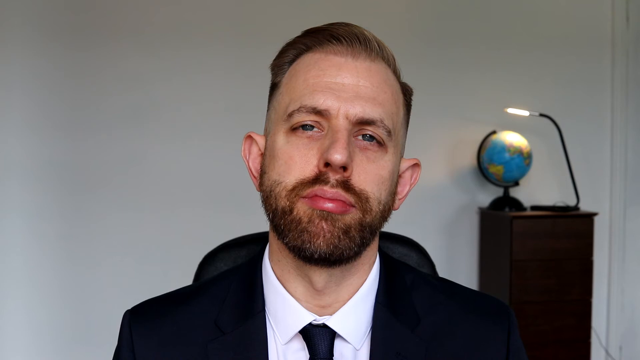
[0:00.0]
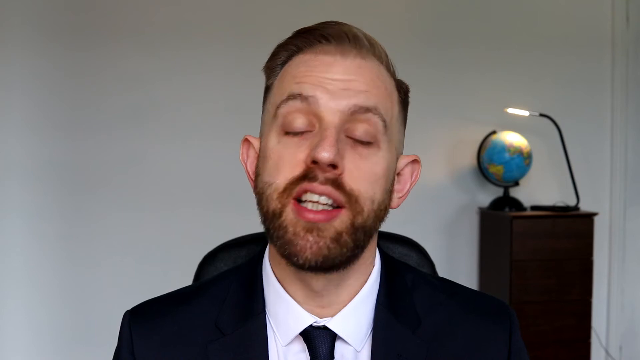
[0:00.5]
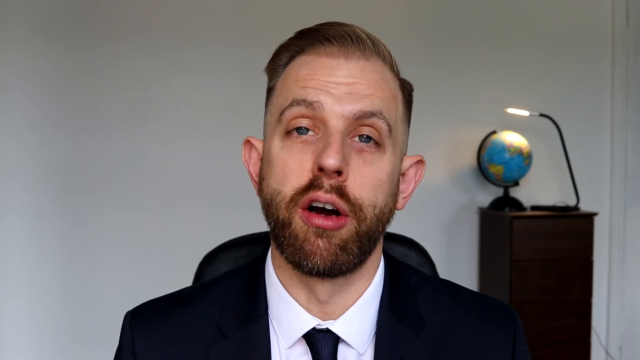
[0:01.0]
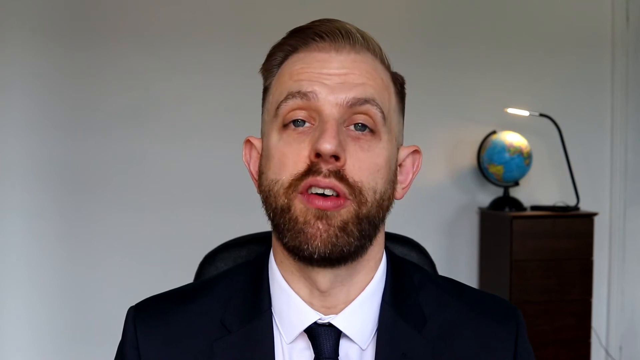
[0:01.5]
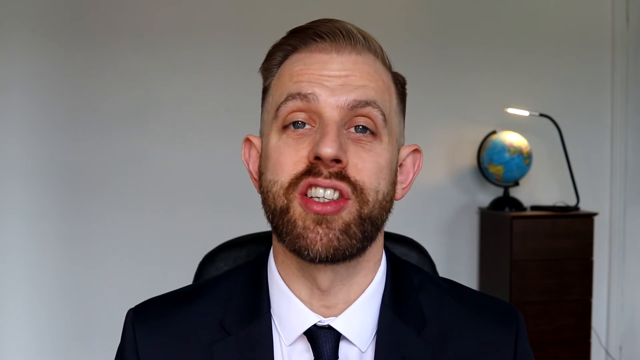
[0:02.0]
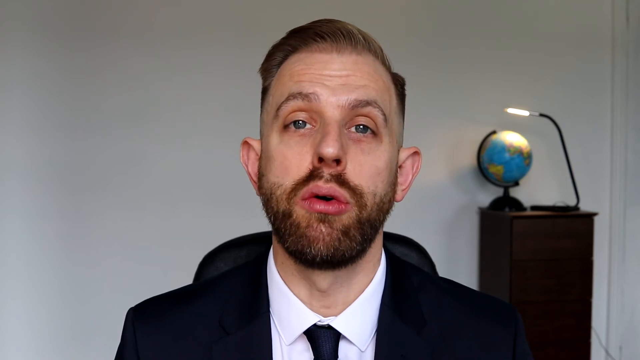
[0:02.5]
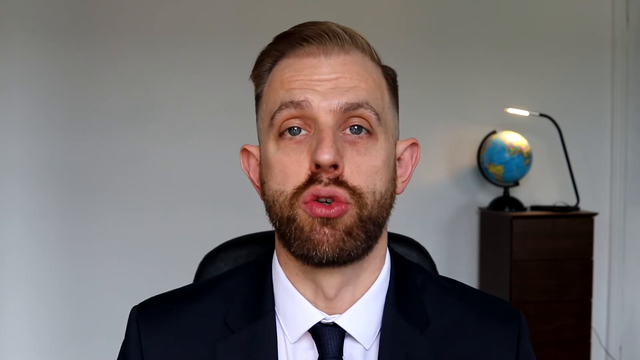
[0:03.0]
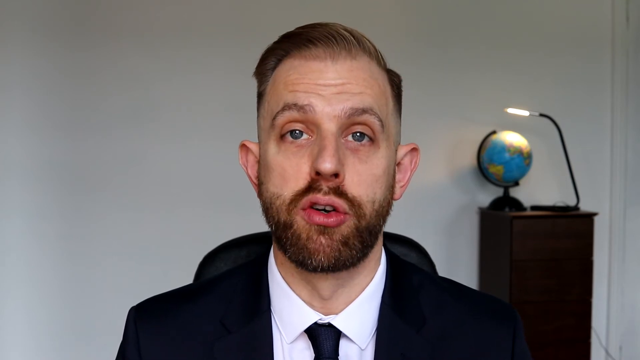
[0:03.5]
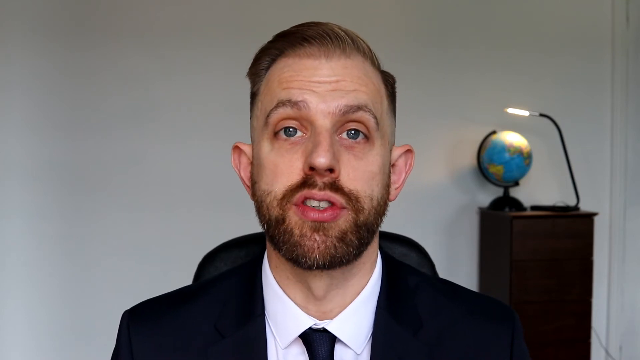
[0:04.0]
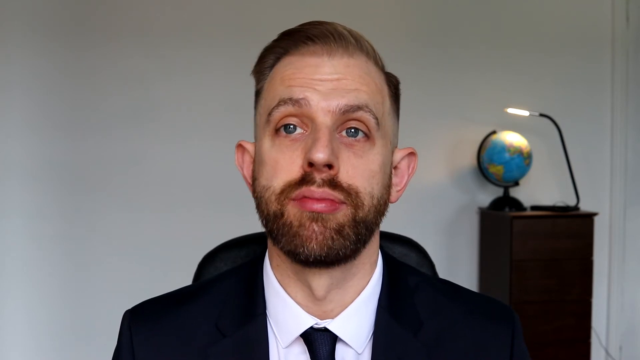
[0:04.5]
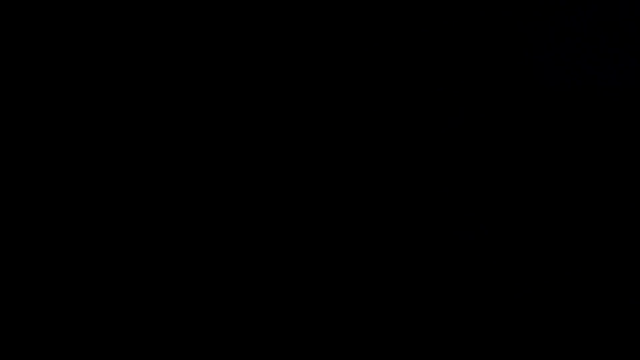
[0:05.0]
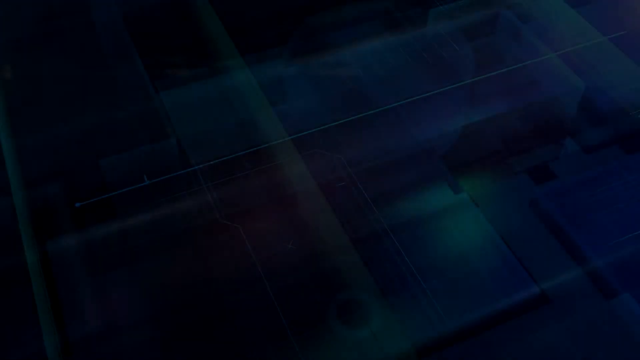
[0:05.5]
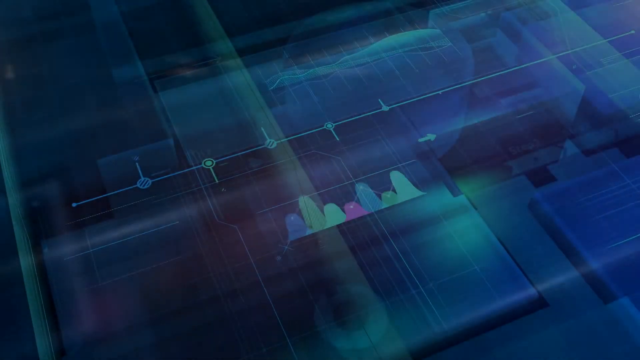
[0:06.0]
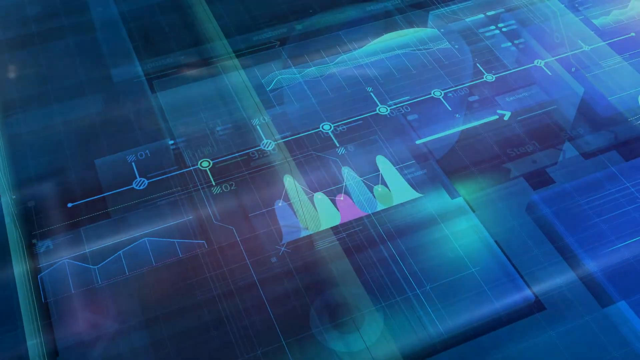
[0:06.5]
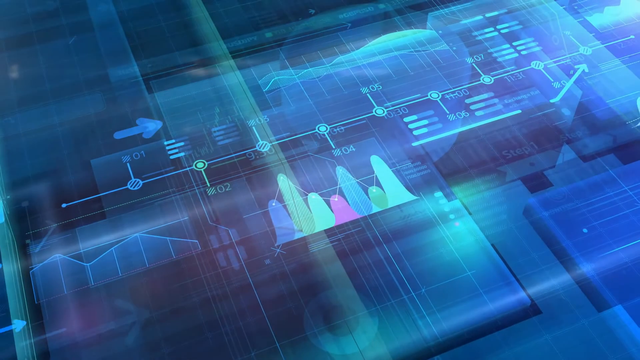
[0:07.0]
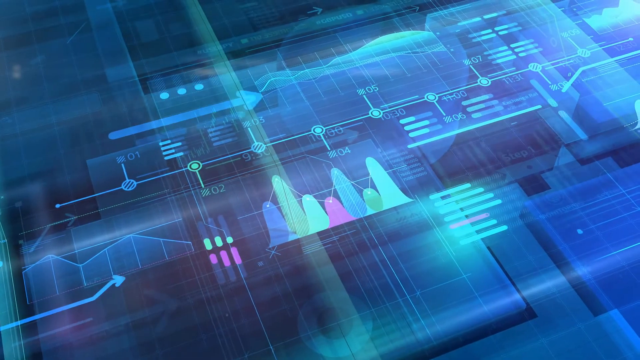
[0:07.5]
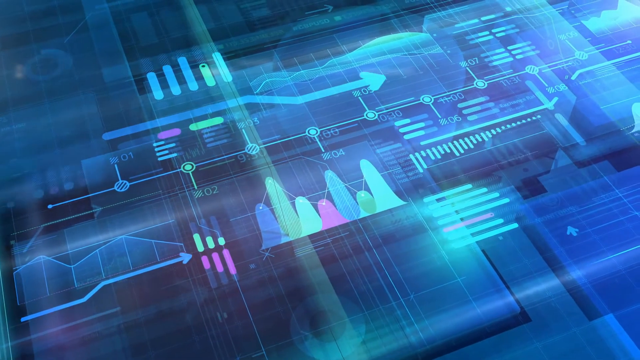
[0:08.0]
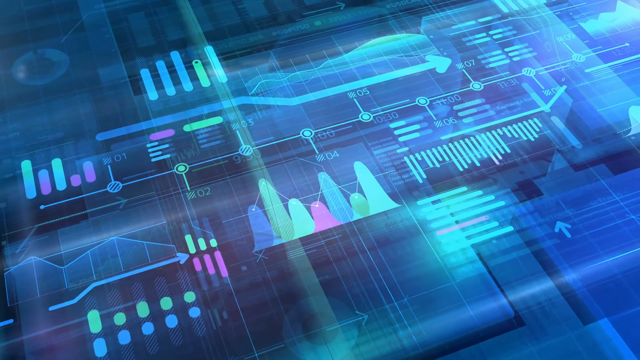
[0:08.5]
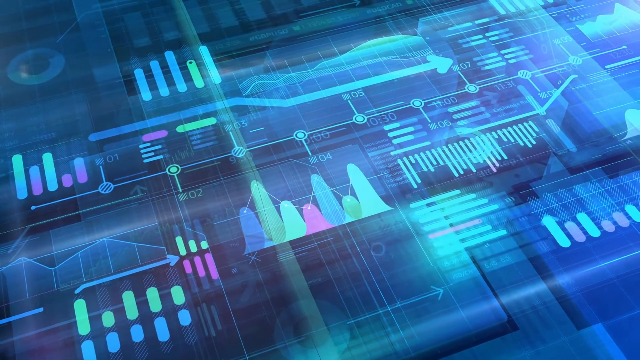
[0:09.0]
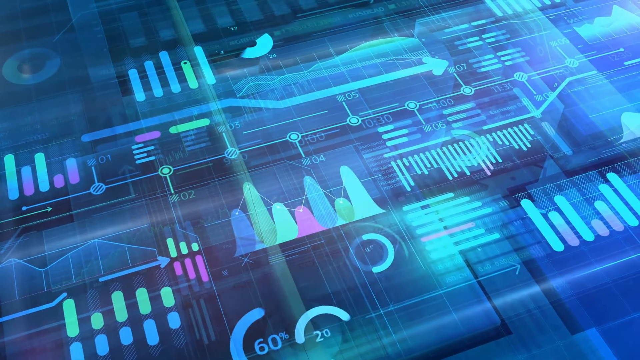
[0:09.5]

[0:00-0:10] A white man with a mustache, a beard and what may be reddish hair talks briefly. He wears what looks like a black coat and has a smug look on his face. The room has a white background, and in the back there is a globe on a stand, possibly a dresser, with a light above it shining down on top of the globe. The video then cuts to a graphic of charts and graphs going up, apparently the intro graphic.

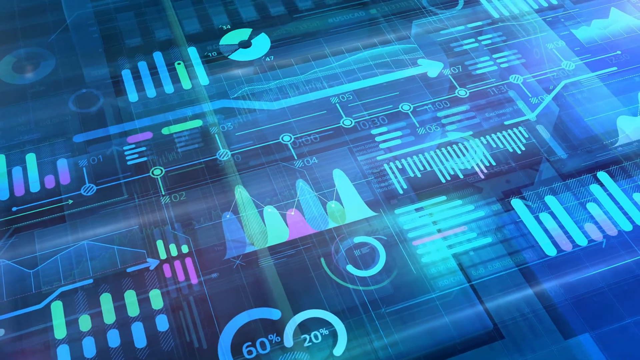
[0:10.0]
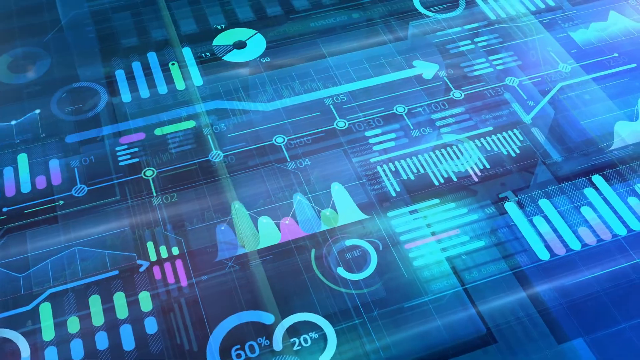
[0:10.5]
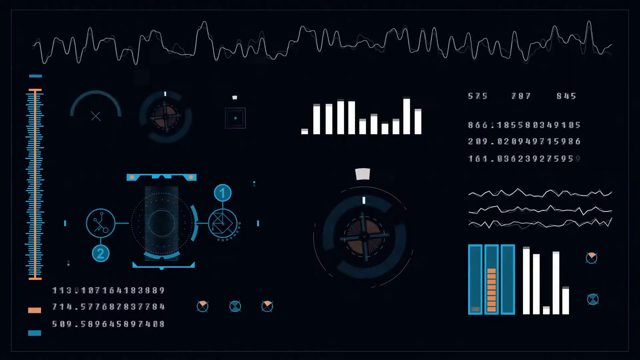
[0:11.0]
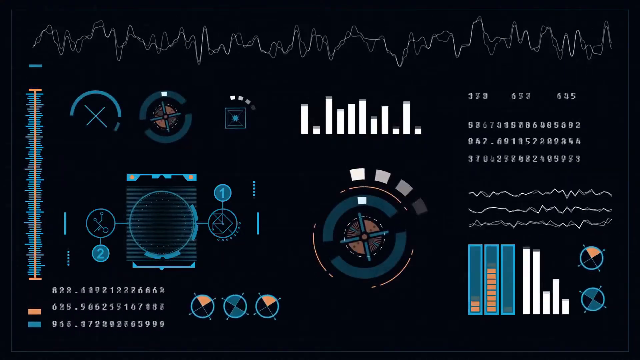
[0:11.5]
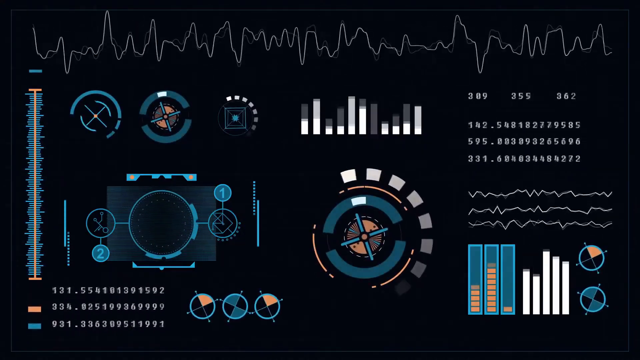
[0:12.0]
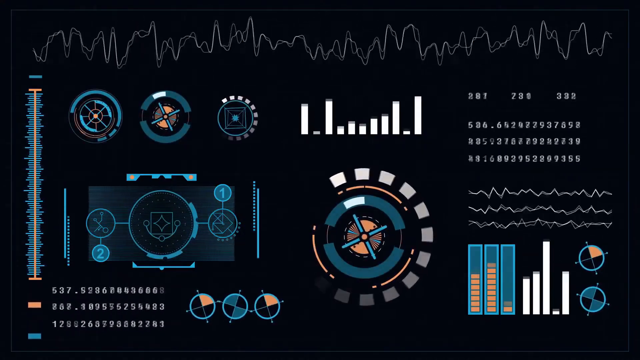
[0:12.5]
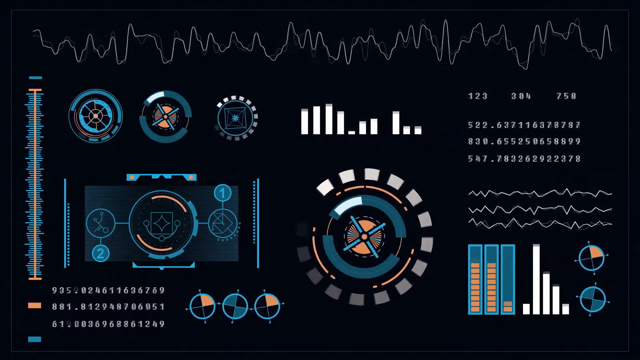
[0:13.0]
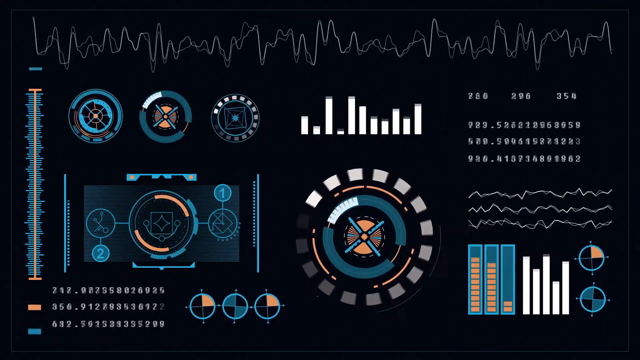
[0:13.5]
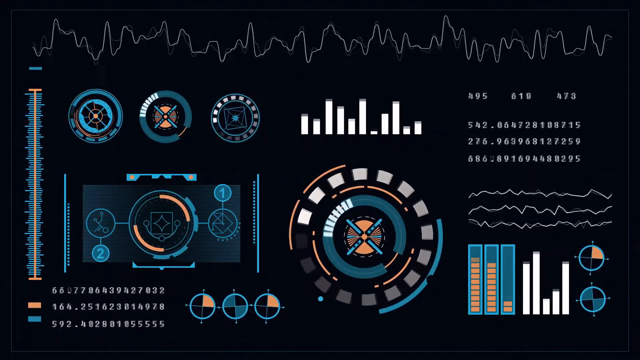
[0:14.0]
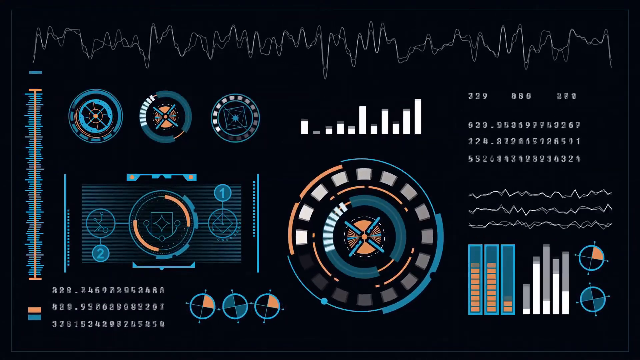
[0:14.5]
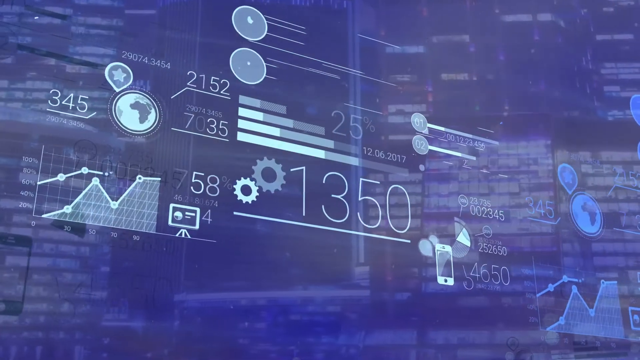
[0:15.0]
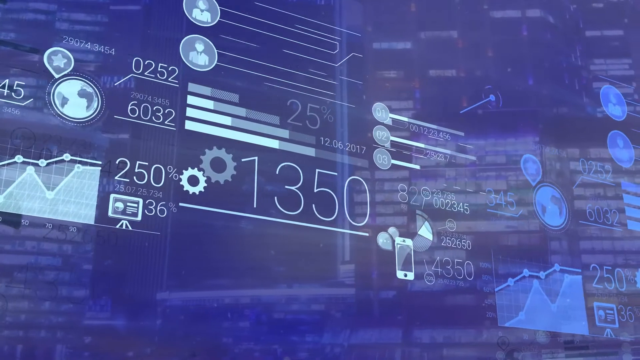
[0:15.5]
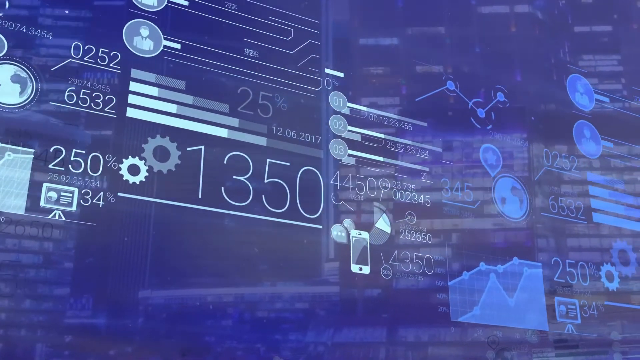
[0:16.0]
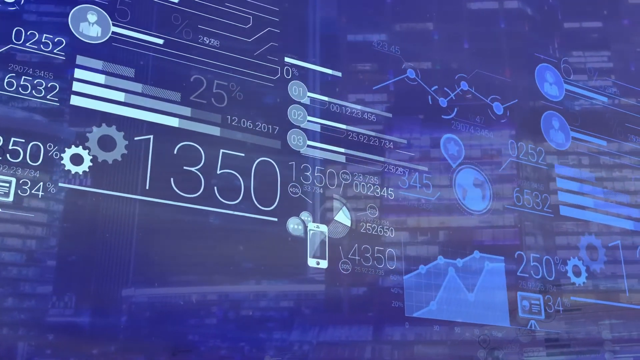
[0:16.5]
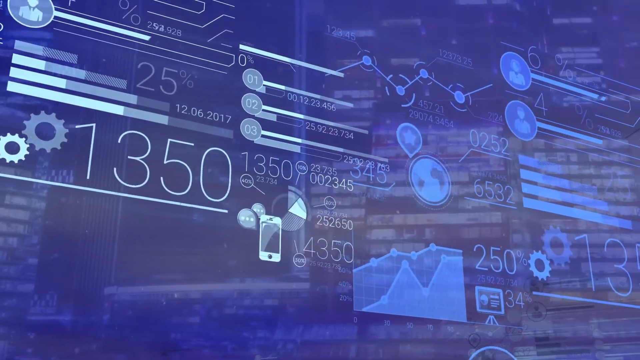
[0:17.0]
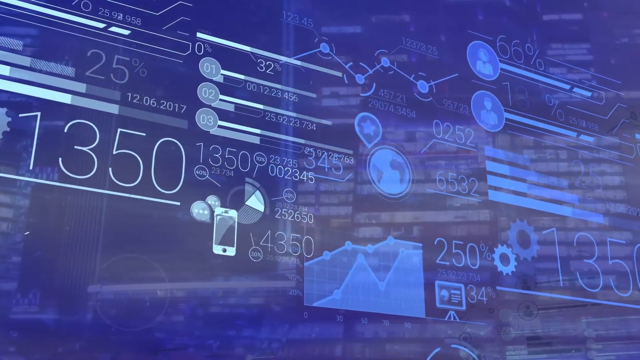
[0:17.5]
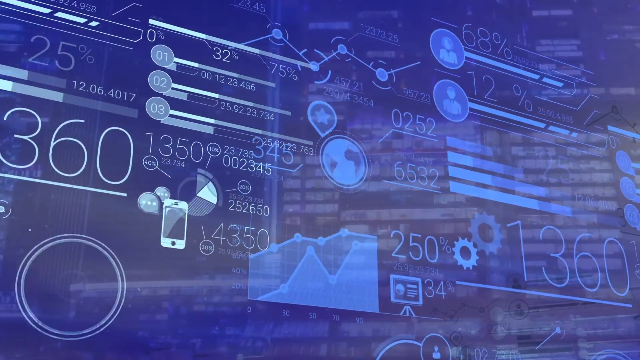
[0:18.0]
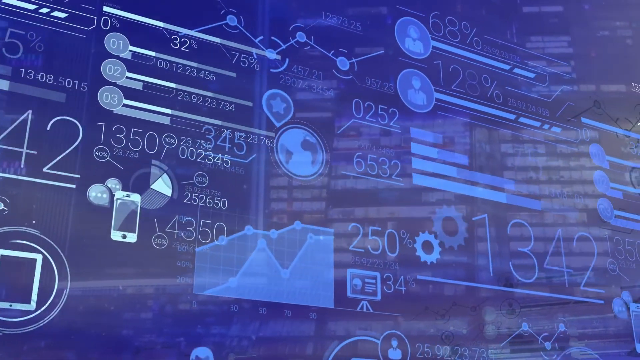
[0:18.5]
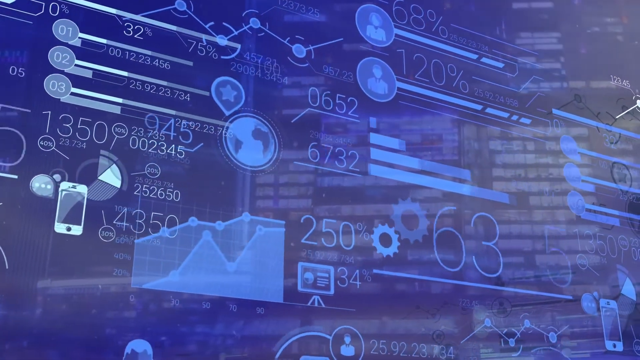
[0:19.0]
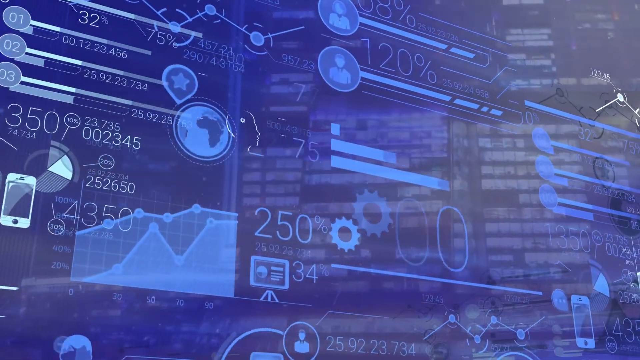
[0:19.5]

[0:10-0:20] The intro graphic moves into another graphic that looks like wheels turning, followed by more graphics showing charts and equalizer-like bars moving up and down, and numbers on graphs resembling a low fuel level gauge. The first graphics have a blue background with graphs and pie charts in many different colors. The next has a black background with mostly white equalizer-looking shapes. The last shows flow charts on a blue background.